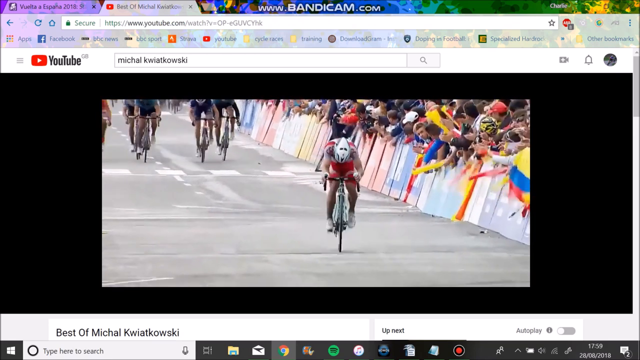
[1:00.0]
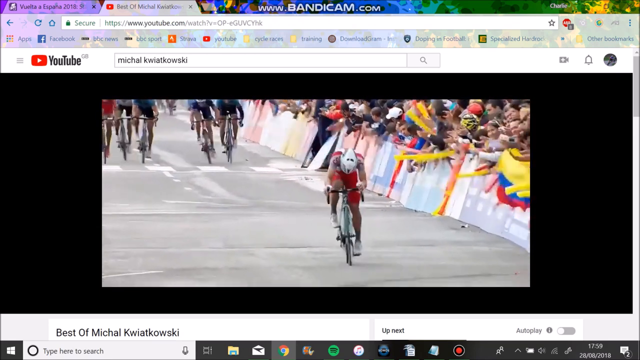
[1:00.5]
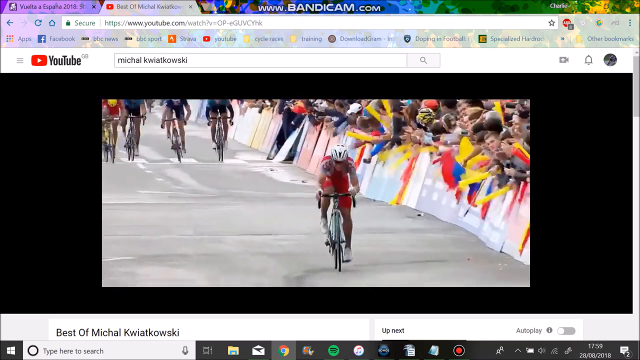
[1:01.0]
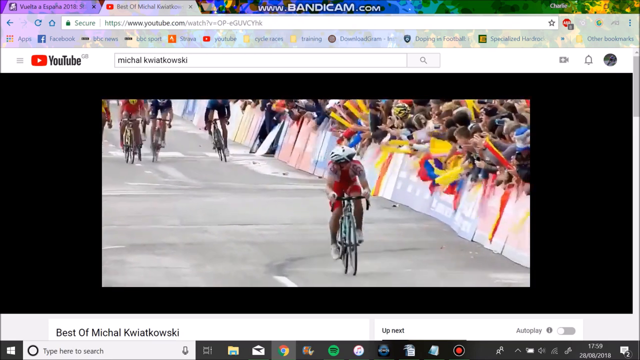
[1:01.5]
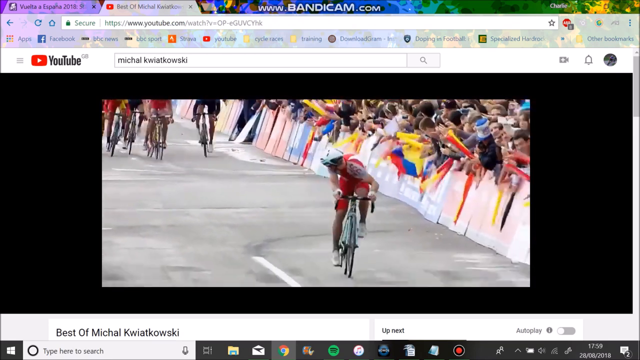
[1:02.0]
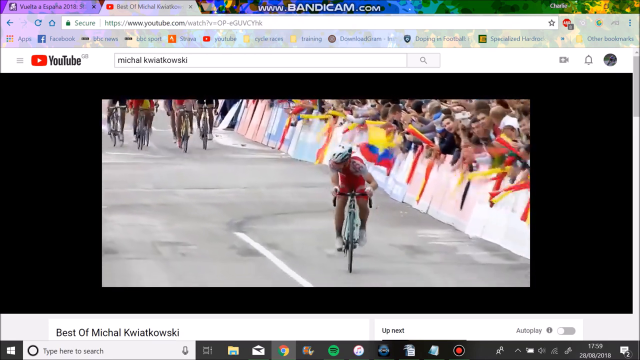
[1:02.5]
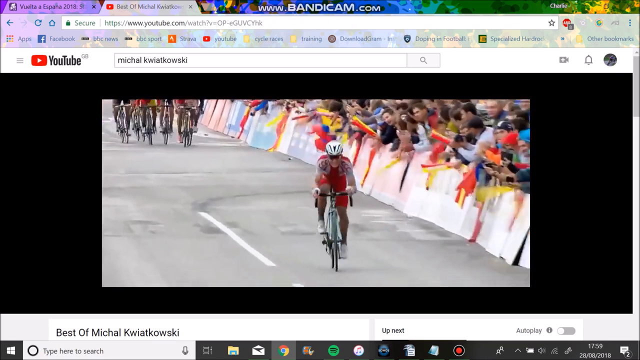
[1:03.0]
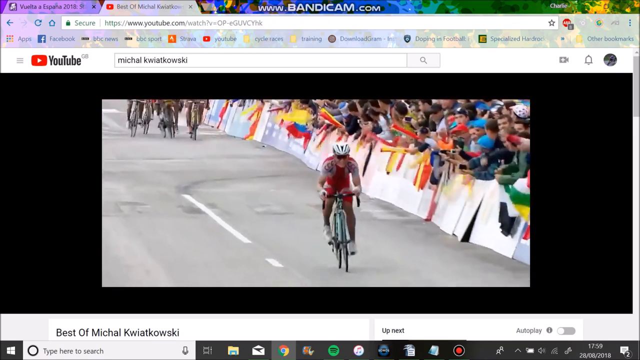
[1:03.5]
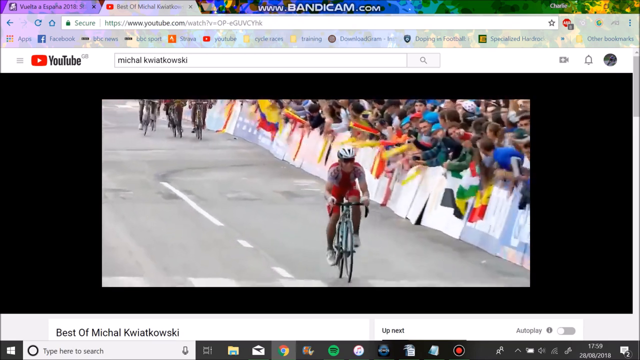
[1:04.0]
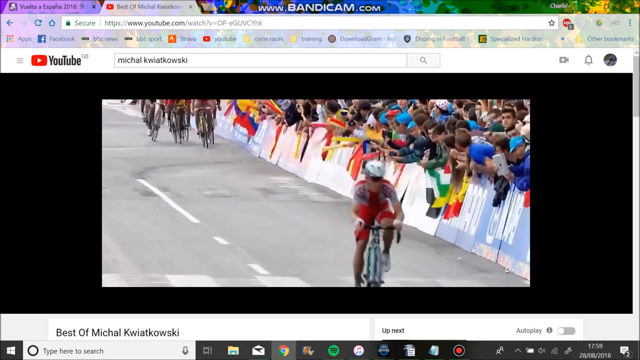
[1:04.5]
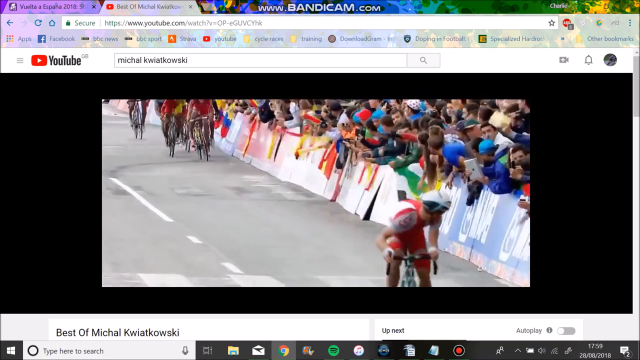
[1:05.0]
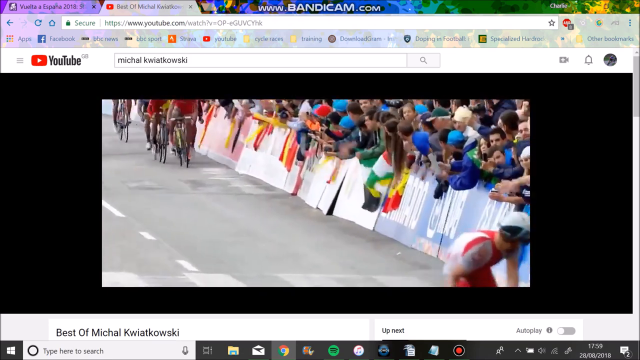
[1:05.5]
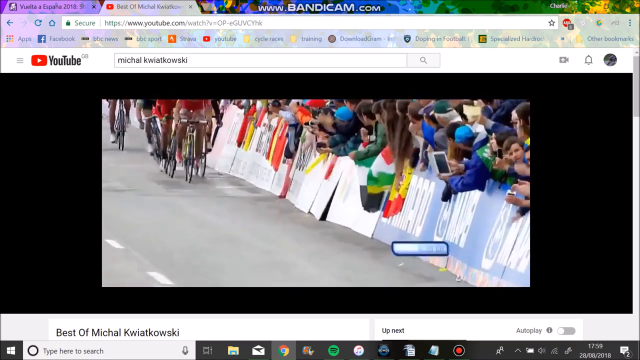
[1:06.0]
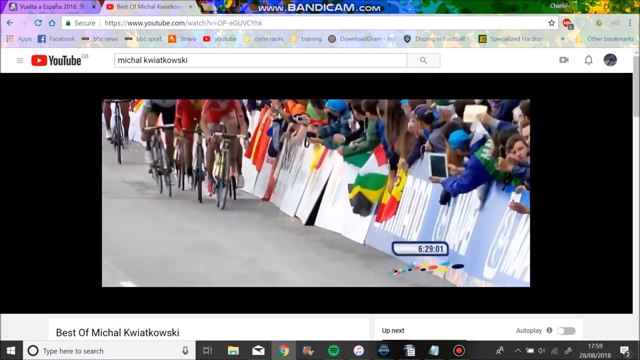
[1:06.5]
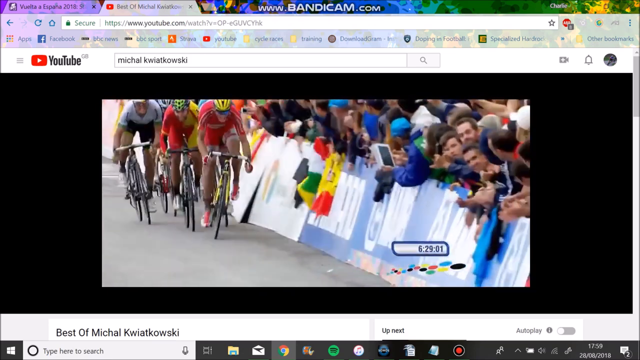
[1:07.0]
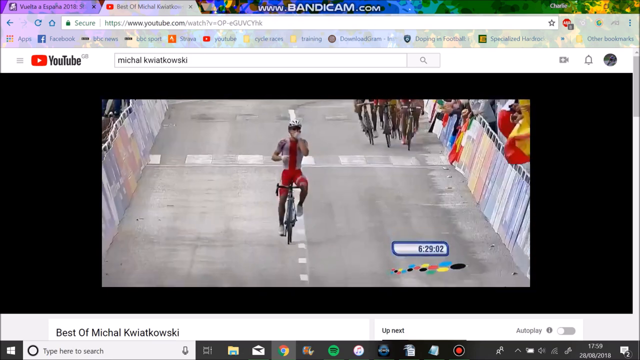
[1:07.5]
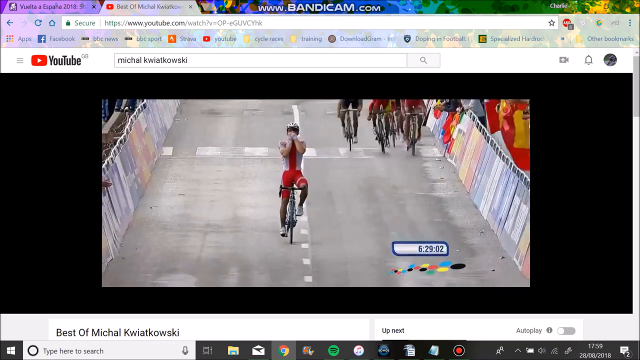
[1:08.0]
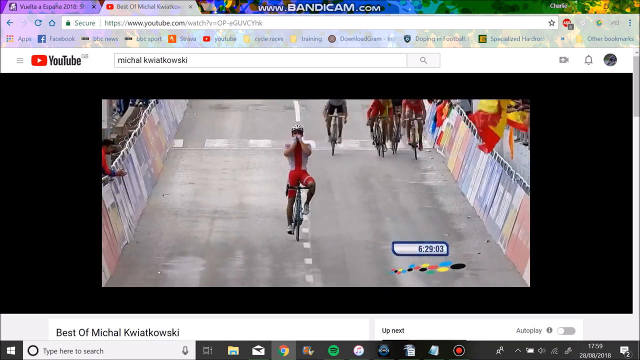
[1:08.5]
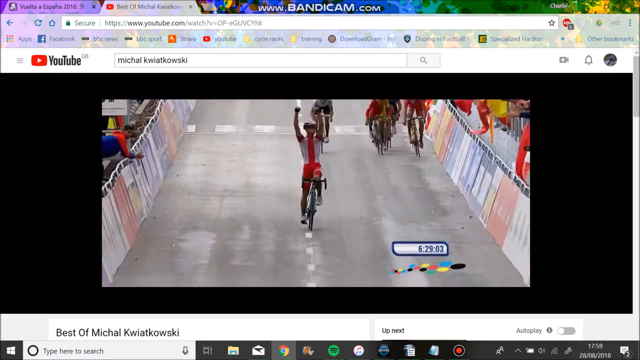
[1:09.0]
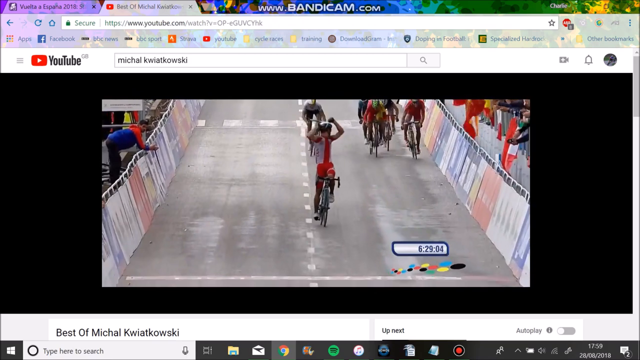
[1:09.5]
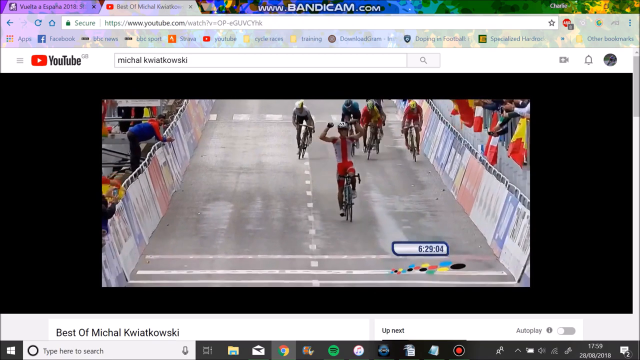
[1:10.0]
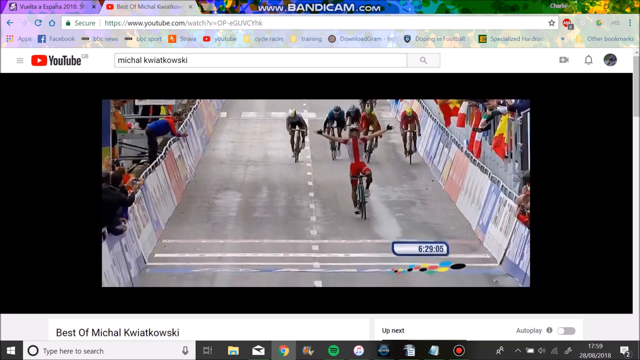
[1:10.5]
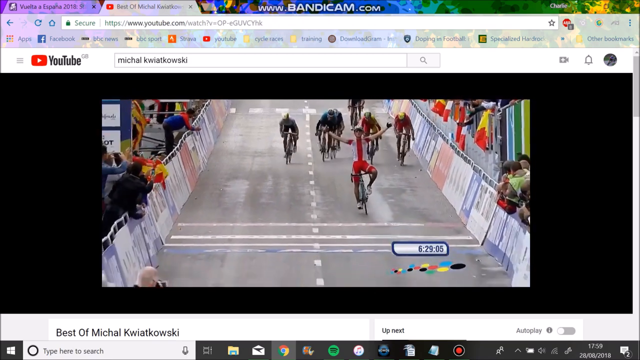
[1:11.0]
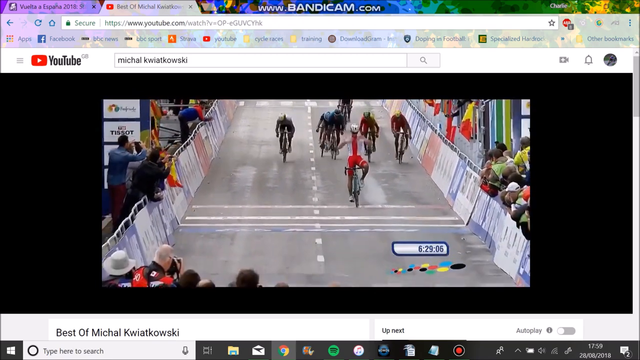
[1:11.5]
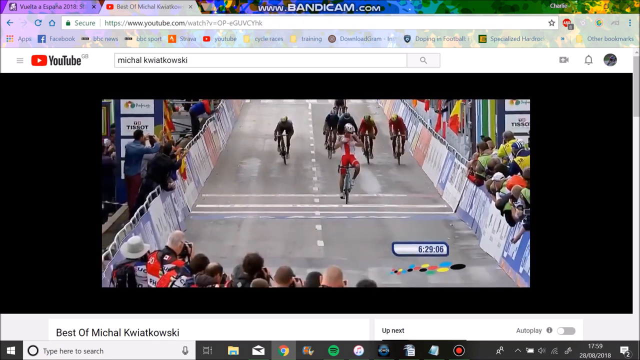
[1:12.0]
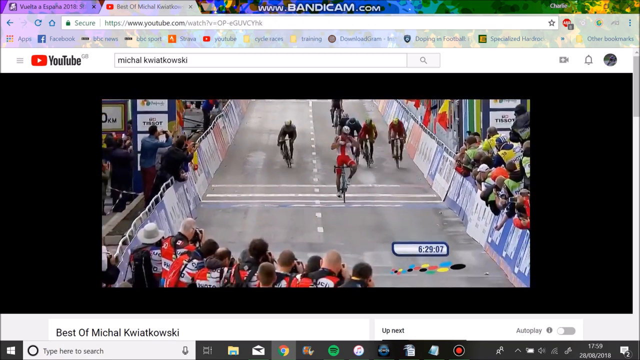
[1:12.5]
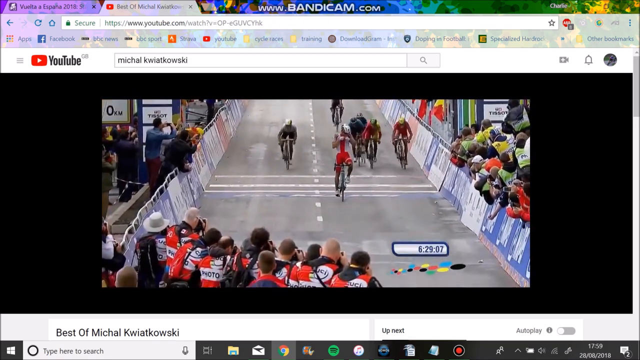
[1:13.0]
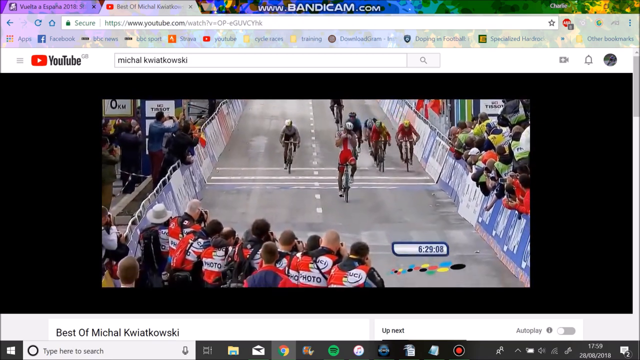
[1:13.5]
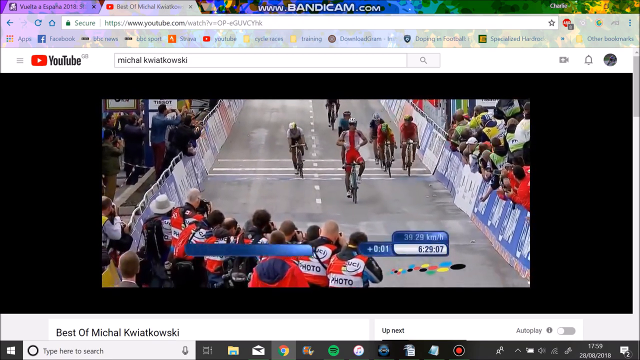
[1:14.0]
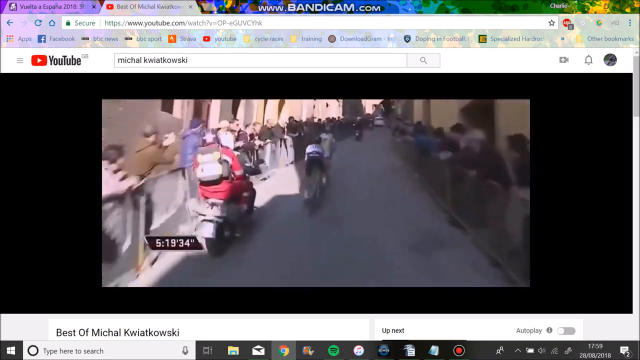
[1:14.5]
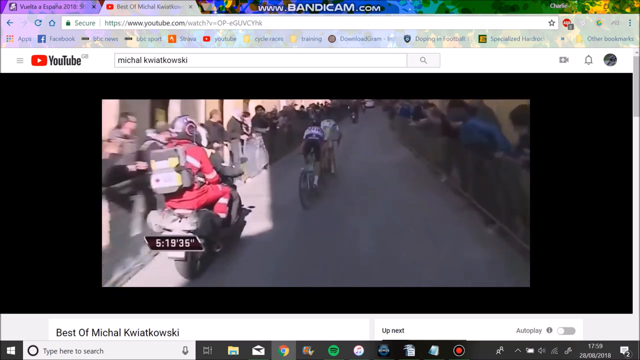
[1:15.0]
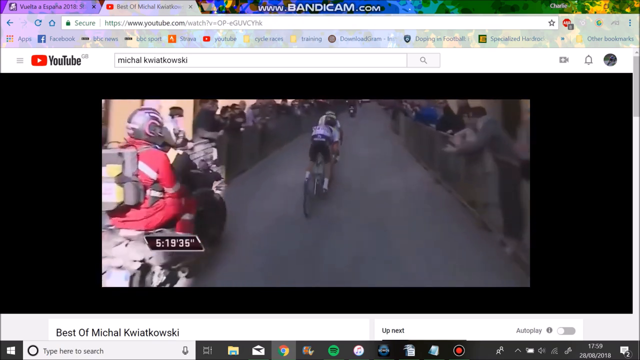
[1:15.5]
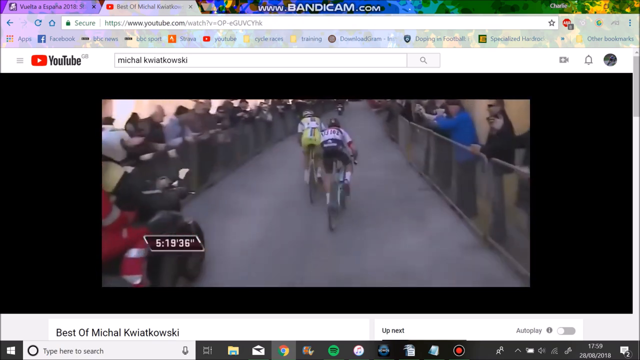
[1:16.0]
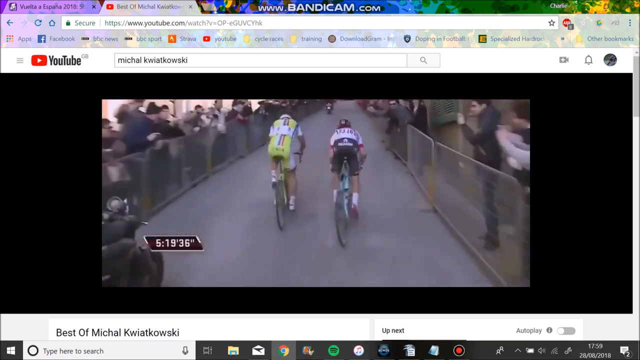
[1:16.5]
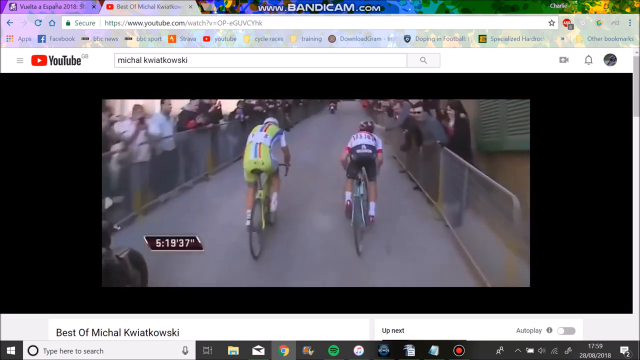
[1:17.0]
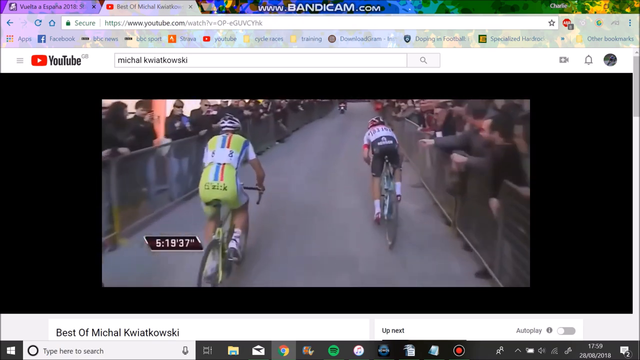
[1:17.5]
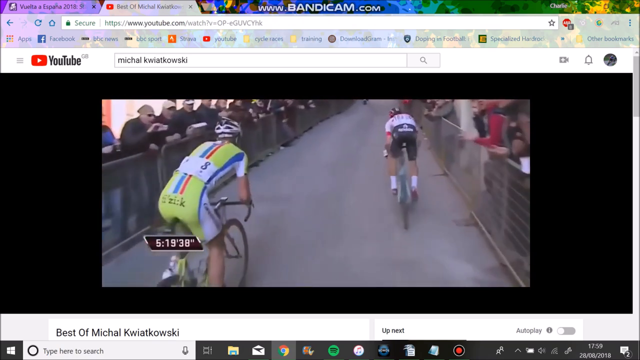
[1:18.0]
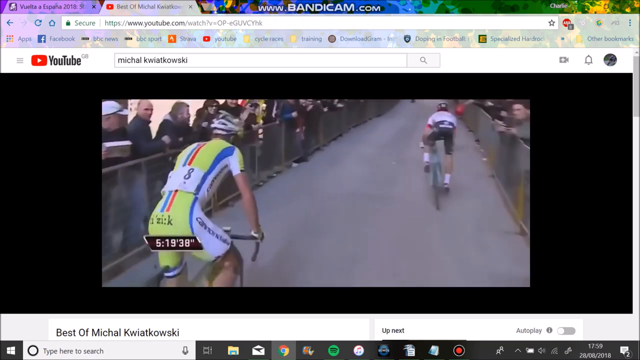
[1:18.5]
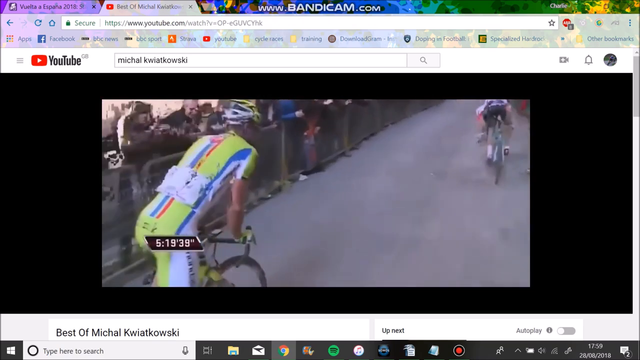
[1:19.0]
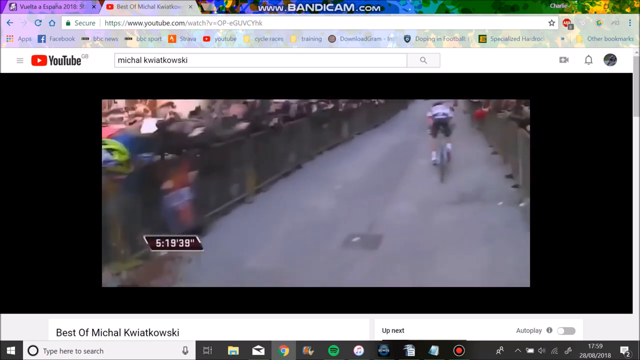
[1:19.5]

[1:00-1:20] A YouTube tab shows "Michael Kwiatkowski" in the search bar, and the video shows a rider in the lead wearing red who looks back at the riders chasing him. Text below reads "best of Michael Kwiatkowski". He puts his hands up in cheer really early and crosses the finish line while the chasers behind cannot reach him. Many people along the sidelines cheer, holding flags and banging on the barriers. The rider finishes the race at 6.29, and another shot shows riders behind him trying to reach the finish line, one of them seemingly filmed from a first-person angle. The browser's bookmarks include Facebook, BBC News, BBC Sport, YouTube, Cycle Races and Football Specialized, among others.